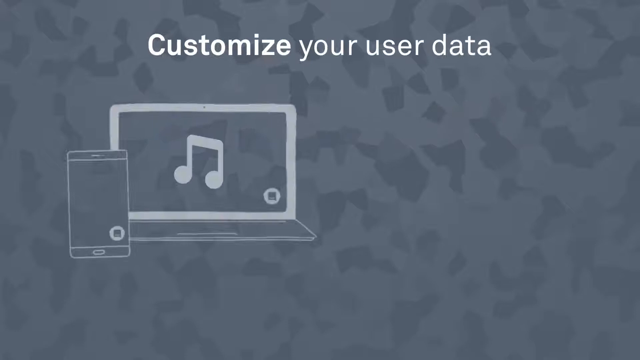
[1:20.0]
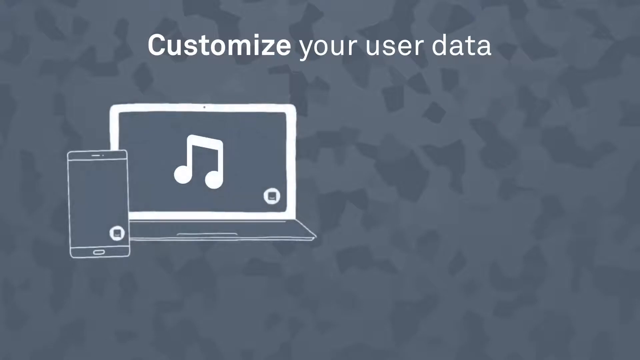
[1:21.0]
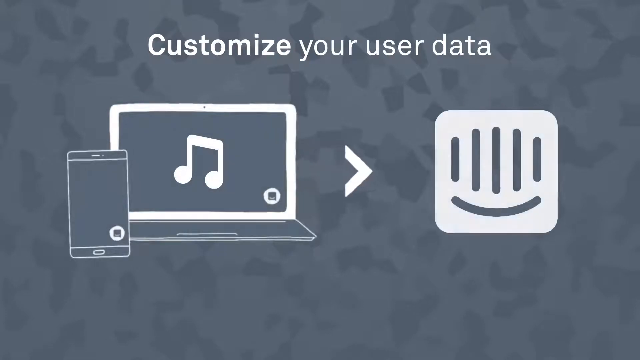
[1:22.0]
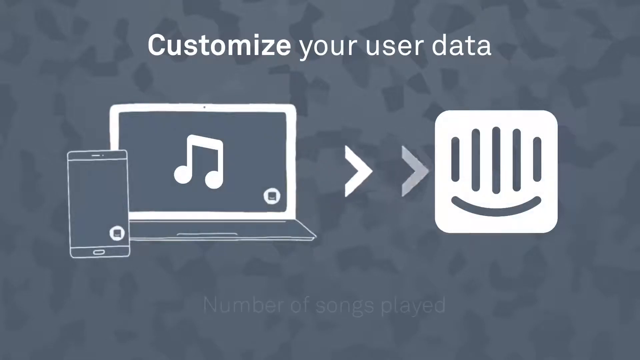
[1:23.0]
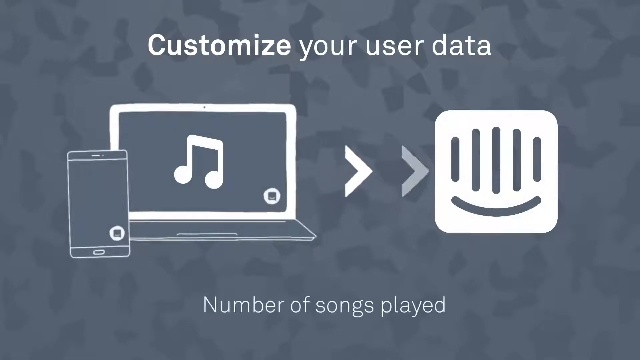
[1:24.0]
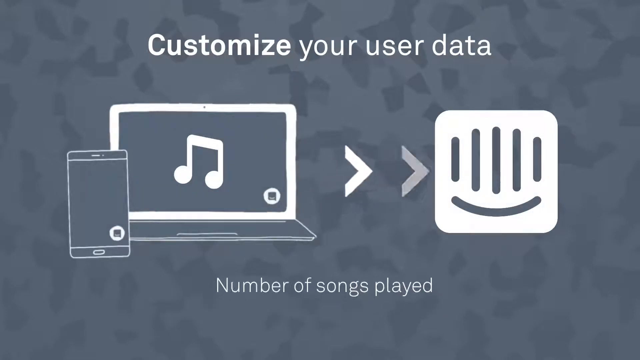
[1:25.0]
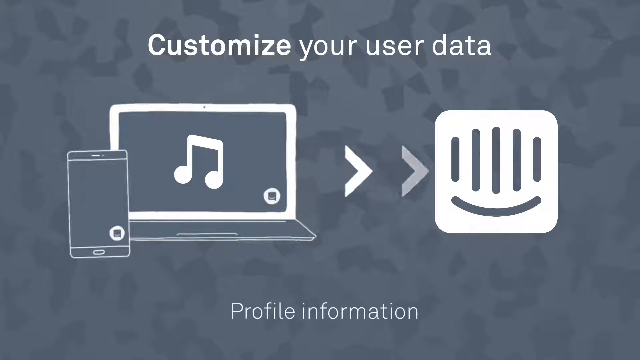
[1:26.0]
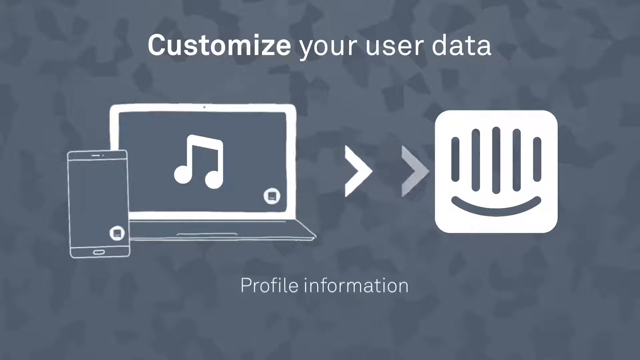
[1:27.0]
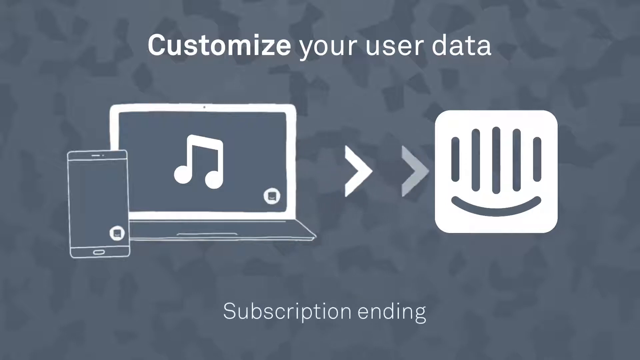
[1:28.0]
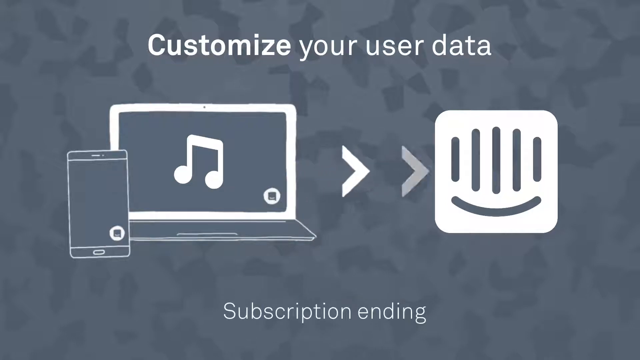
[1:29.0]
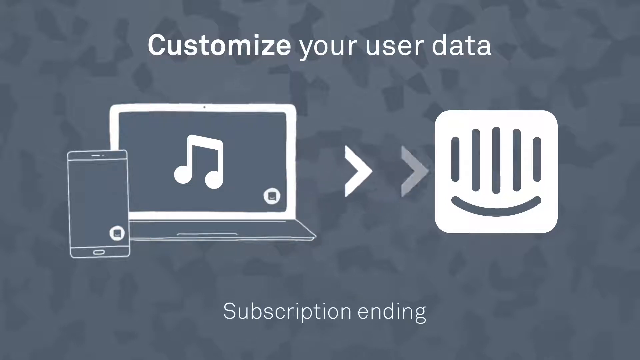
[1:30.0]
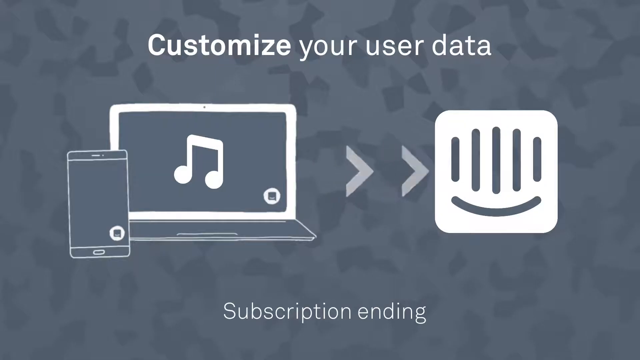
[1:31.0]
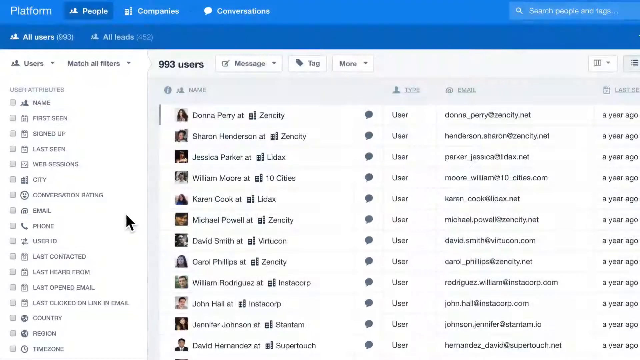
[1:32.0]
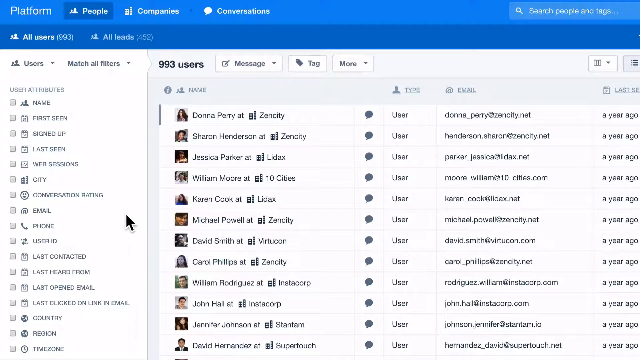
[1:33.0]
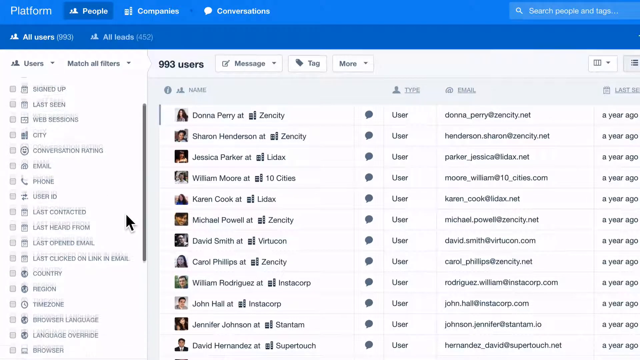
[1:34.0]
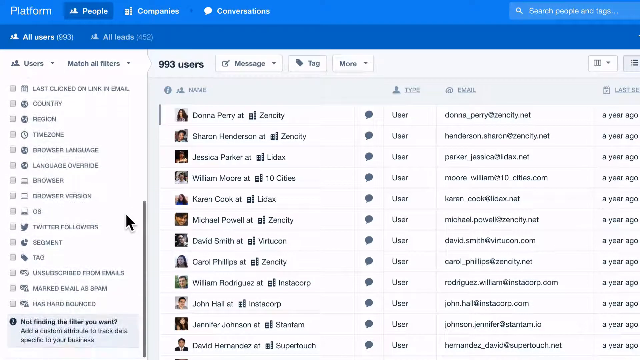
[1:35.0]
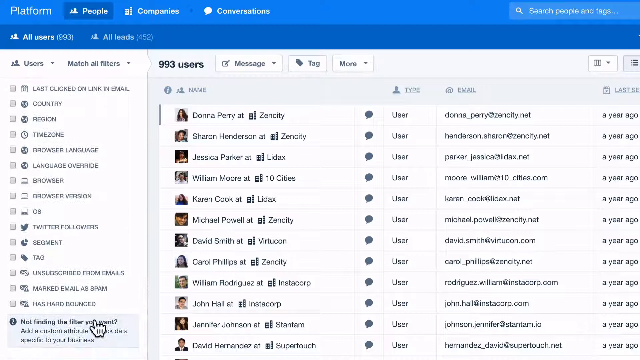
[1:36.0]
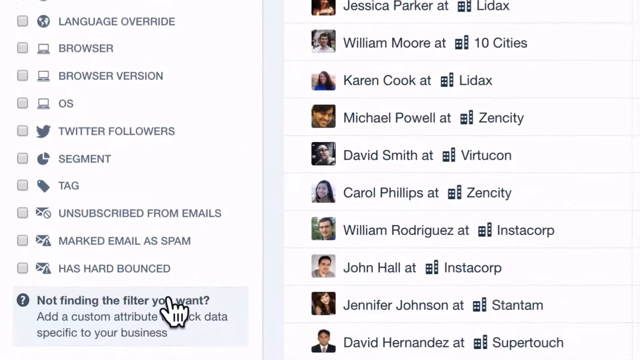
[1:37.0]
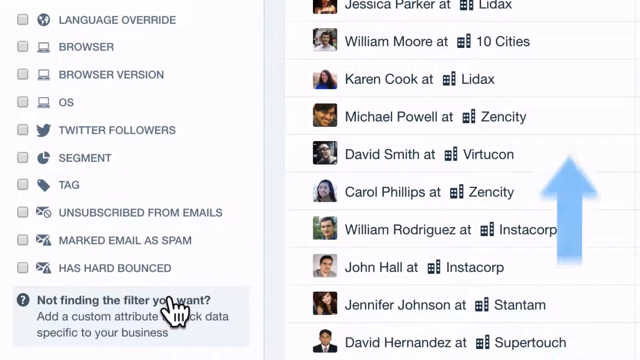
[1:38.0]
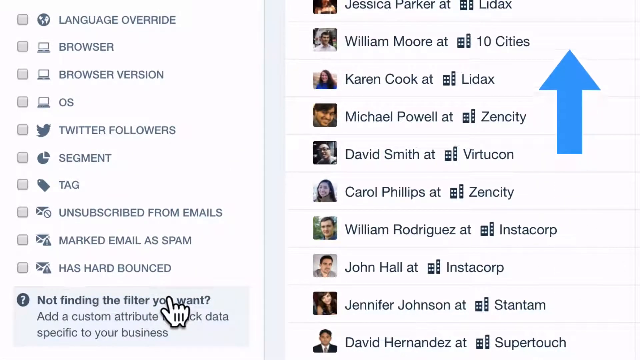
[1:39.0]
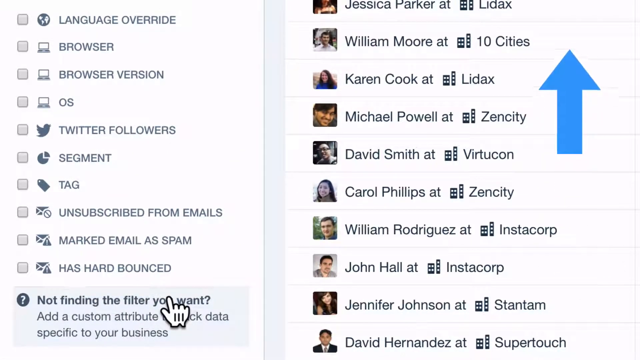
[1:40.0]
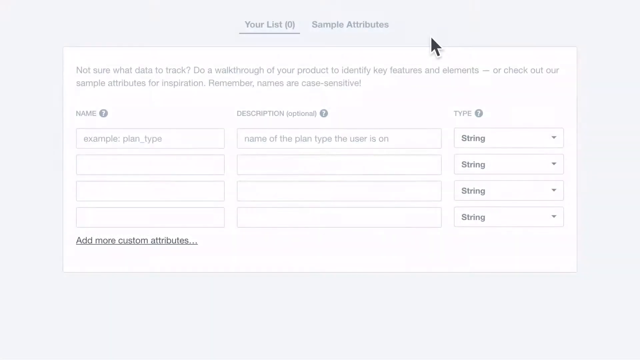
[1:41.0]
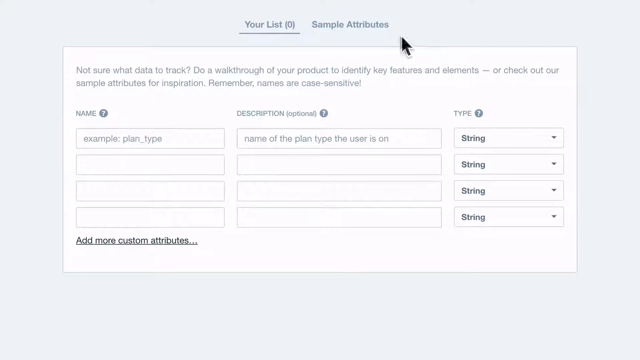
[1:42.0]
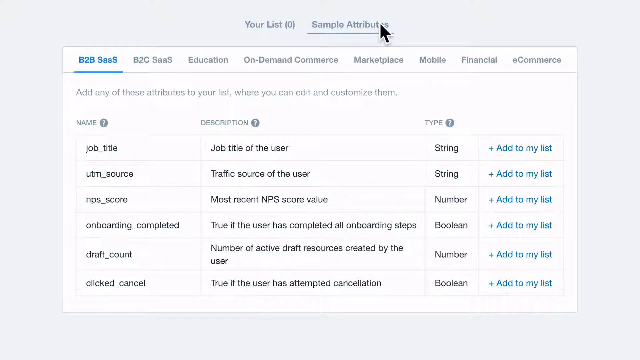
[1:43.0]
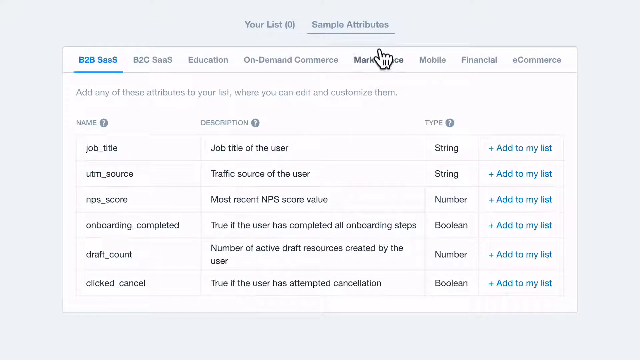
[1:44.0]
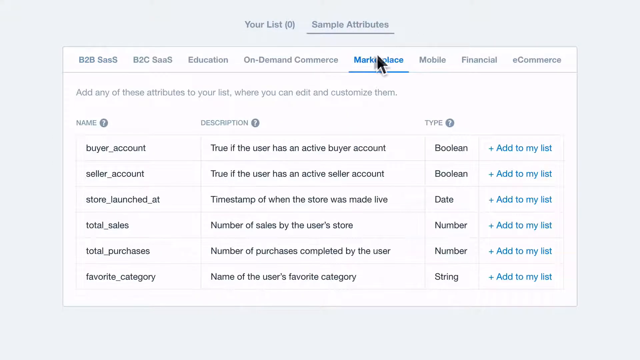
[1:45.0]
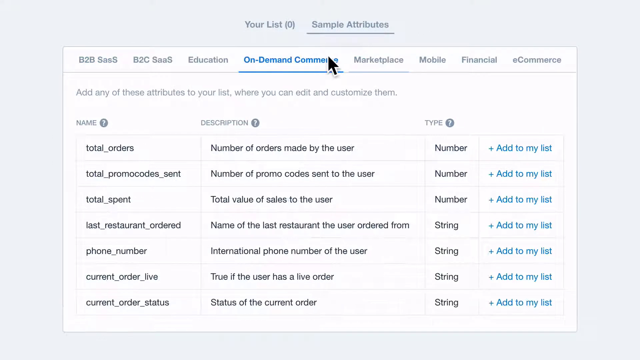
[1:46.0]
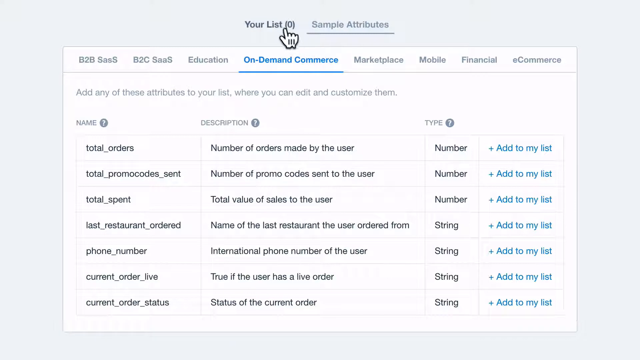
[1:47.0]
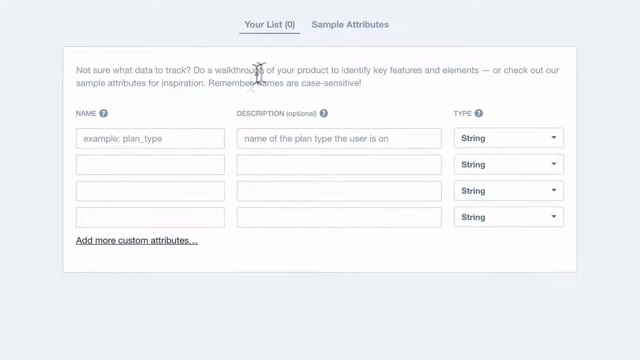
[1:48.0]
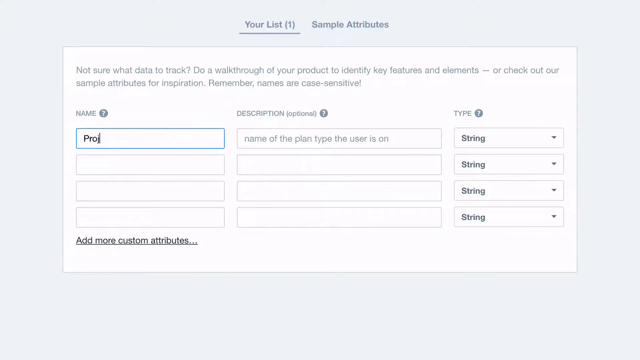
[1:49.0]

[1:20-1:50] A blue screen shows multiple shapes in different shades of blue with "customize your user data." A laptop with a musical note in it has an arrow going from it on the left into another device on the right. A list called "your list" with "sample attributes" appears, and multiple items are typed in. Back on the profile information, "subscription ending" appears, along with a cell phone to the left of the computer screen. The next page shows "users 993"; the mouse scrolls down a column on the left side that can be scrolled up and down. "Platform" is at the top, with "people," "companies" and "conversations," and under that another ribbon reads "all users 991" and "all leads 452." A users item has a little people icon of a larger person and a smaller person, and it says "match of others." There are multiple areas the mouse cursor can click on. On the right, two and a half columns are visible: the first has names of people and apparently the names of the companies they were at, the next has blue dots and says "user," the third has their email addresses, and the half column says "a year ago." There are approximately eight names.